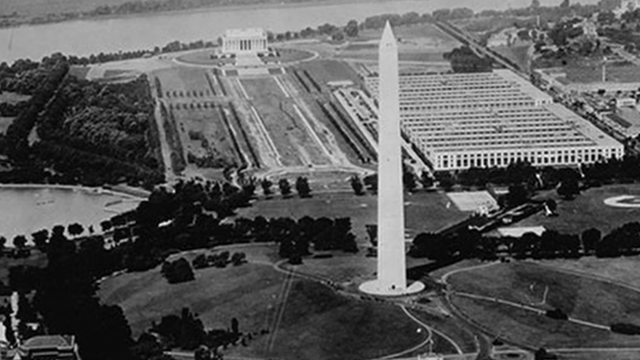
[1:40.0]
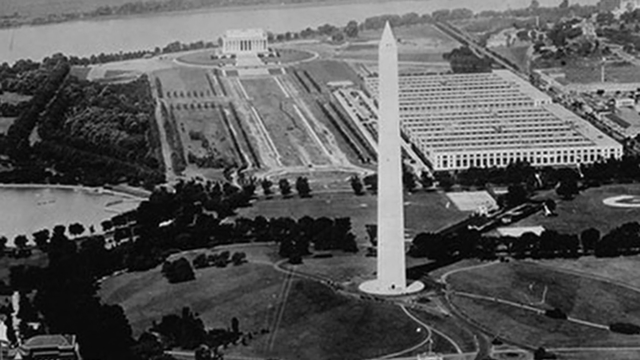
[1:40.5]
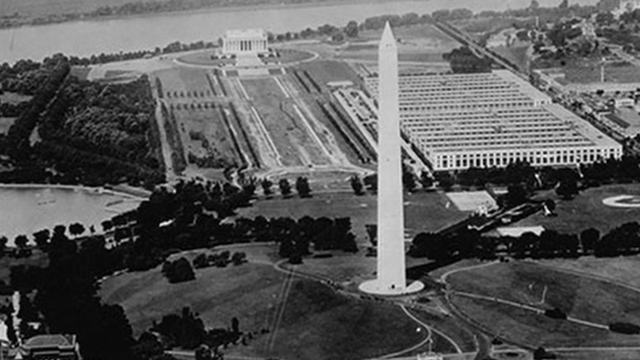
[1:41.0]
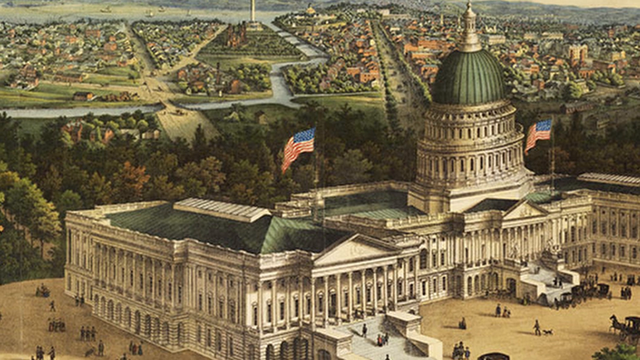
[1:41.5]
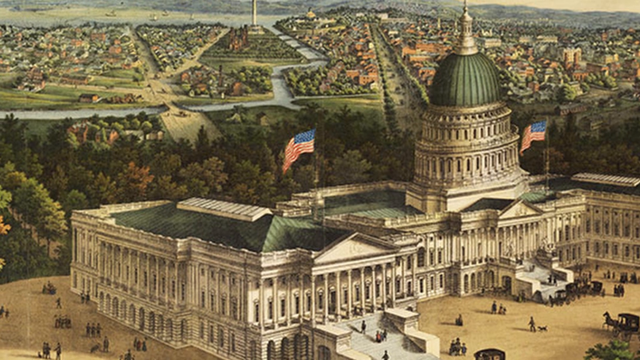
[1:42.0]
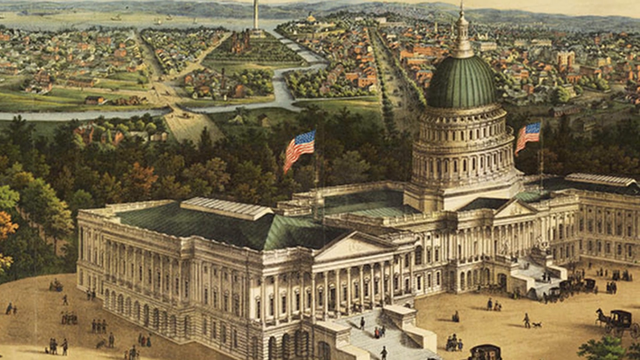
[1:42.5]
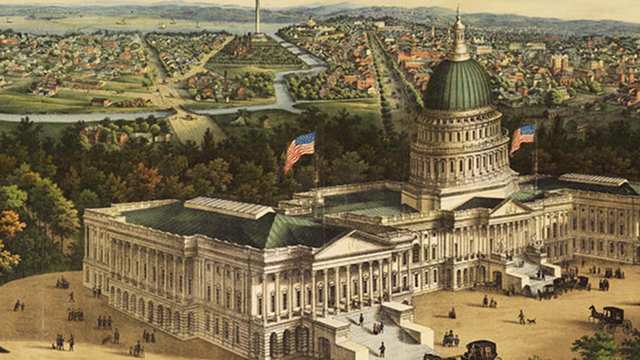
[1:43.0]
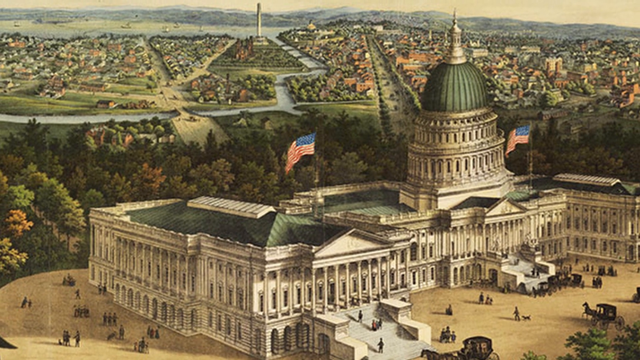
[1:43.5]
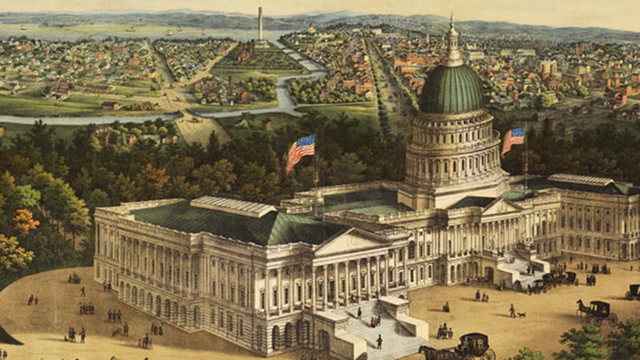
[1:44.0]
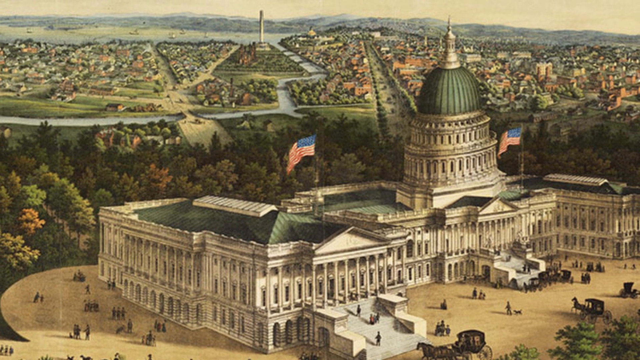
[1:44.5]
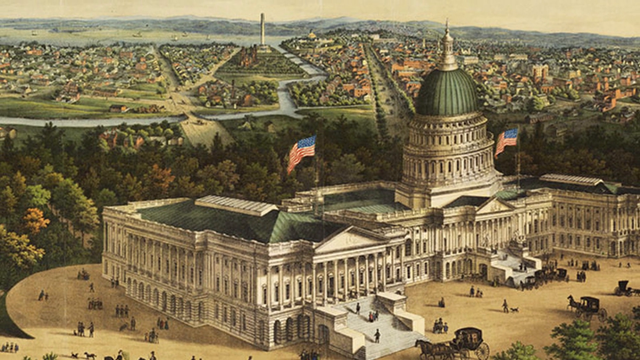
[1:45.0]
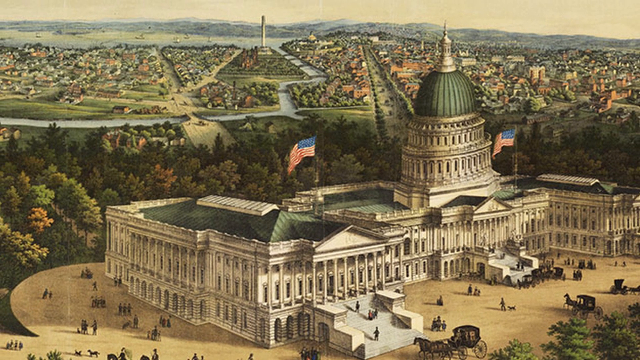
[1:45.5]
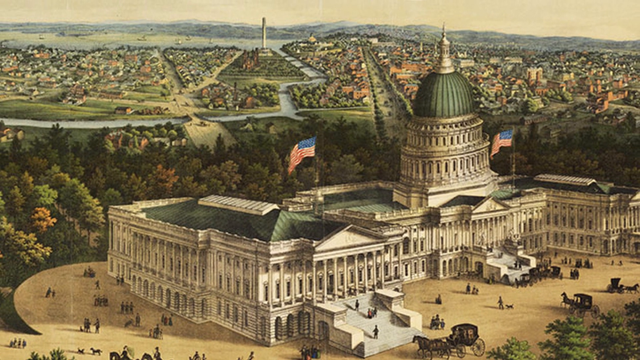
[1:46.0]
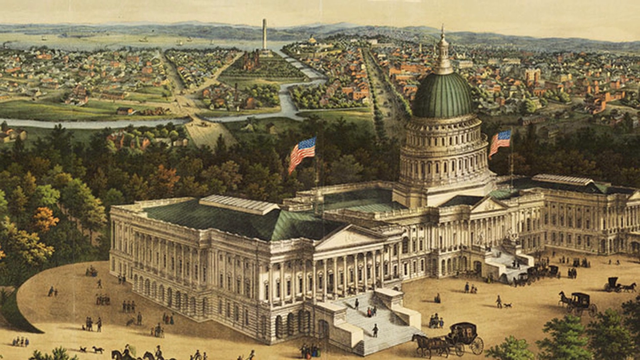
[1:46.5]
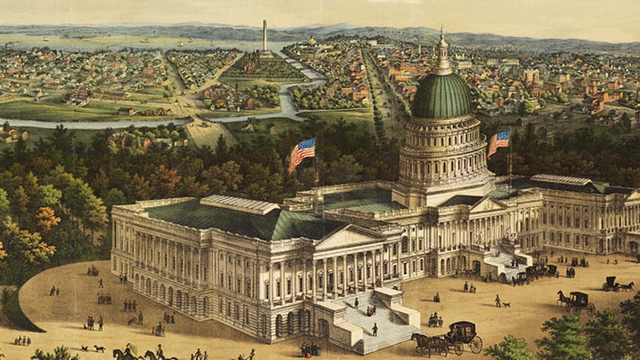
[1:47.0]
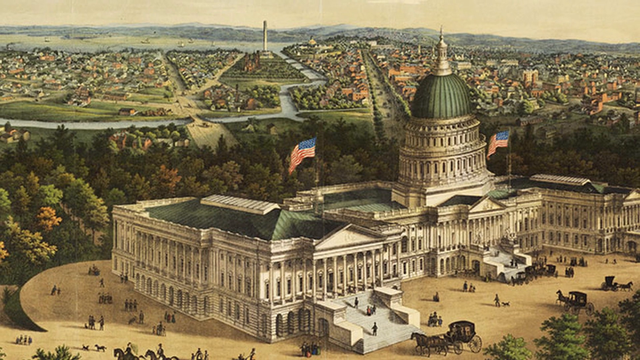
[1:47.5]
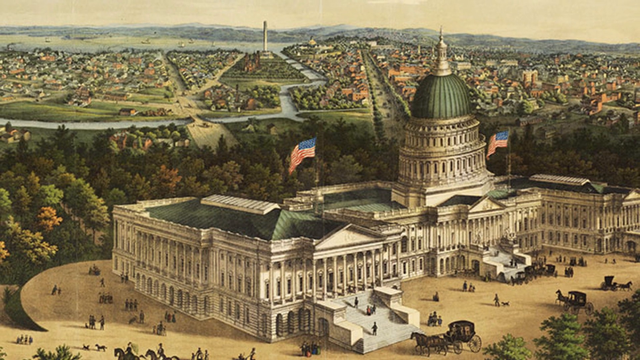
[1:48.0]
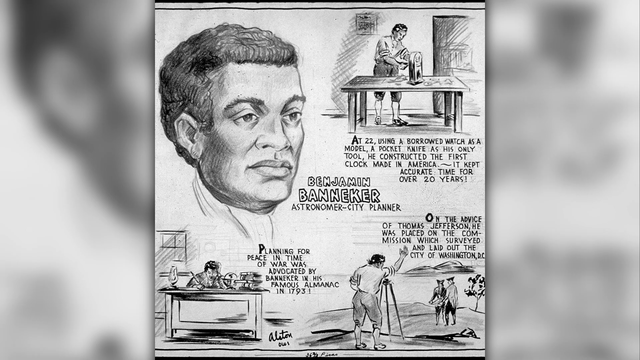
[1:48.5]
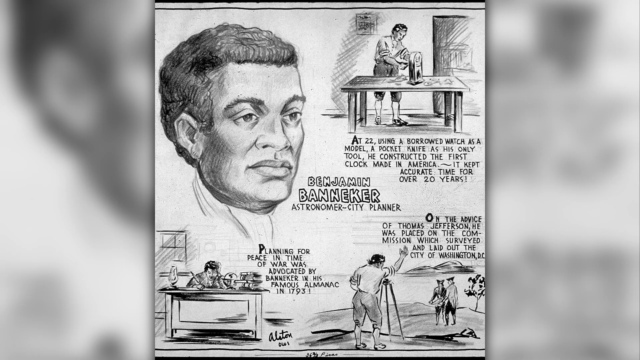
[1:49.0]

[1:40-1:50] An old-fashioned picture shows the federal buildings in Washington, with the area at the front with pillars and walkways, and the dome. Two American flags are flying at either side of the building, and the green roof is visible. People are milling about in the area to the front and side of the building. To the rear is an area with lots of trees, and the Washington Monument is in the background near the river. There are houses in the distance under the buildings, and in the far distance there are trees and mountains. The screen then cuts to a pencil picture made up of a number of drawings of Benjamin Banneker, the astronomer and city planner. One shows him working at a bench mending clocks, with the caption "at 22 using a borrowed watch as a model, a pocket knife as his only tool he constructed the first clock, made in America. It kept accurate time for over 20 years." Underneath a portrait of his head, he is shown at work at a desk, where it says "planning for peace in time of war was advocated by Banneker in his famous almanac in 1793". Next to this, in the bottom centre, he is shown working at a tripod looking out towards an island, and it says "on the advice of Thomas Jefferson he was placed on the commission which surveyed and laid out the city of Washington DC".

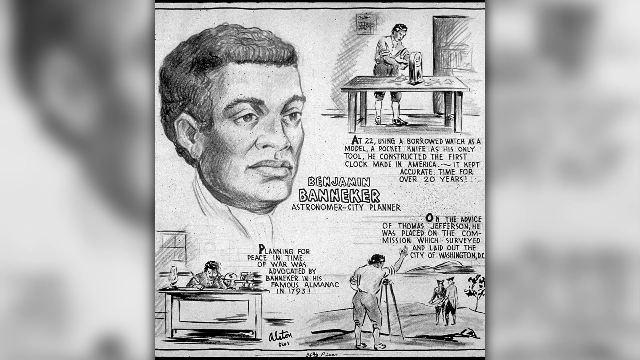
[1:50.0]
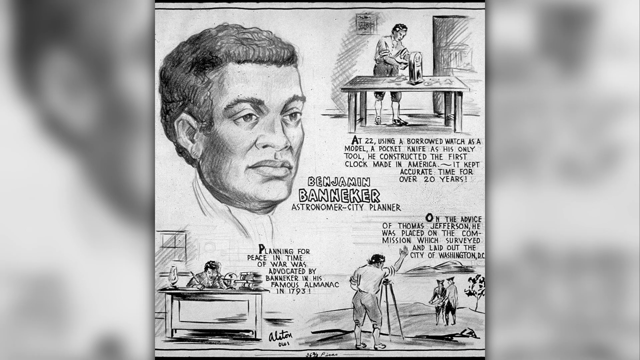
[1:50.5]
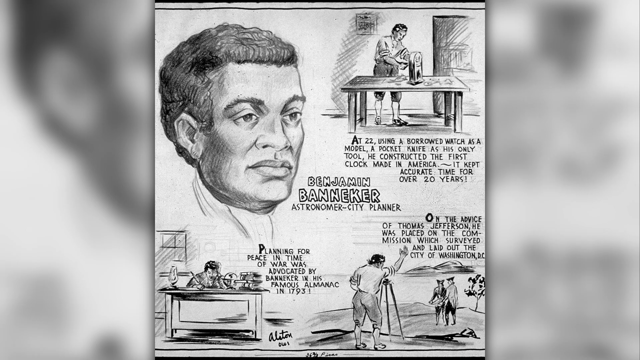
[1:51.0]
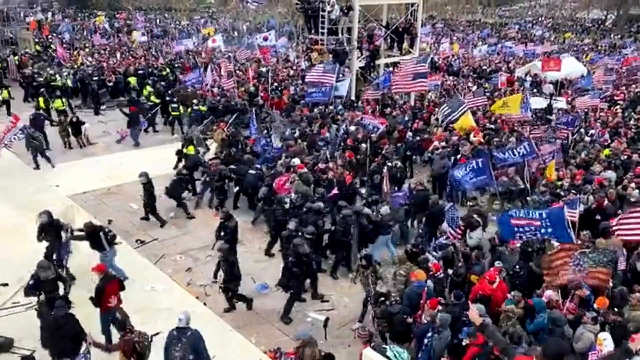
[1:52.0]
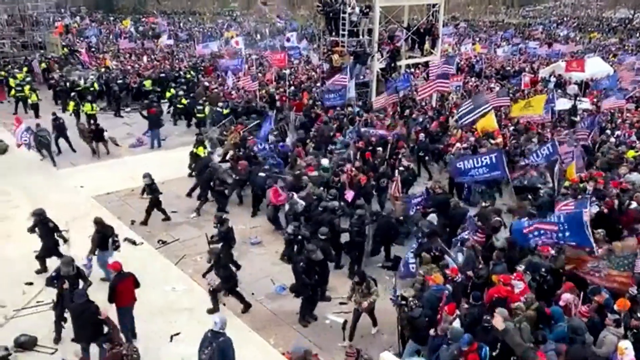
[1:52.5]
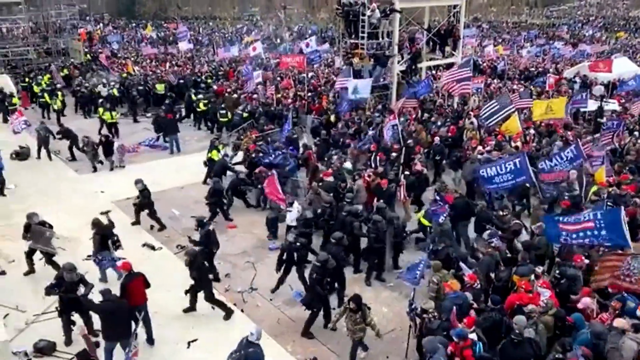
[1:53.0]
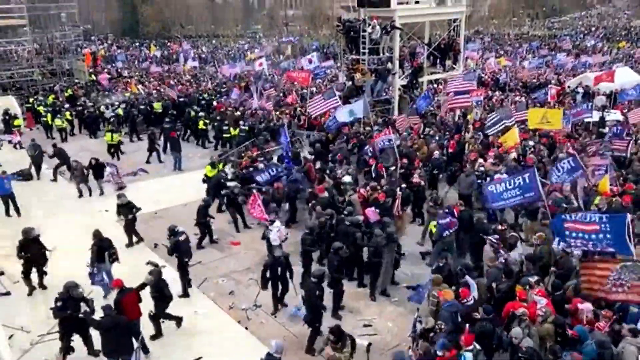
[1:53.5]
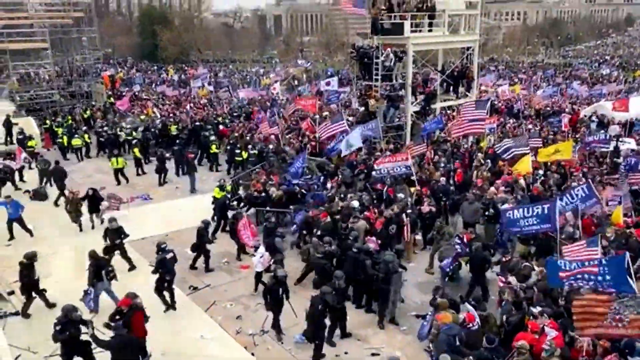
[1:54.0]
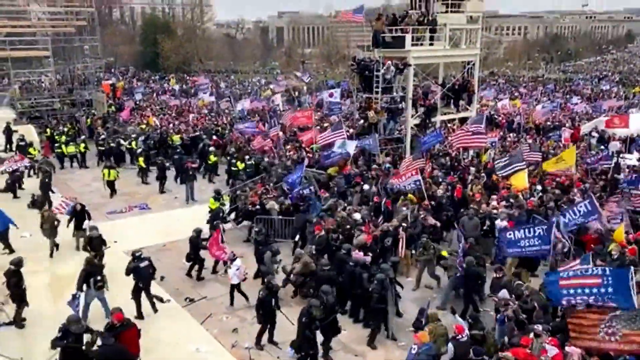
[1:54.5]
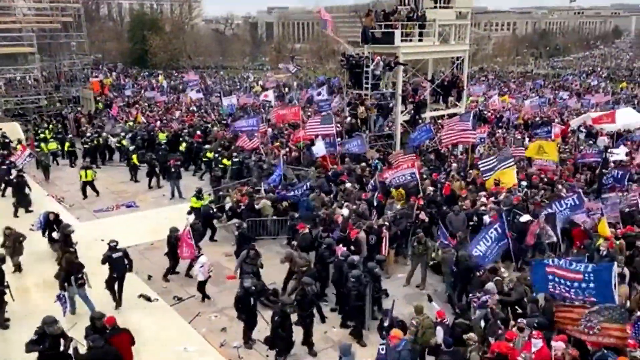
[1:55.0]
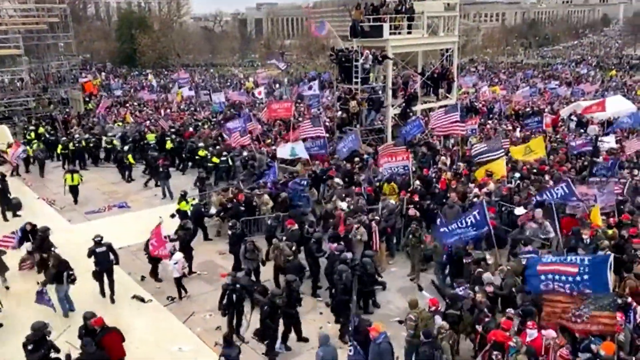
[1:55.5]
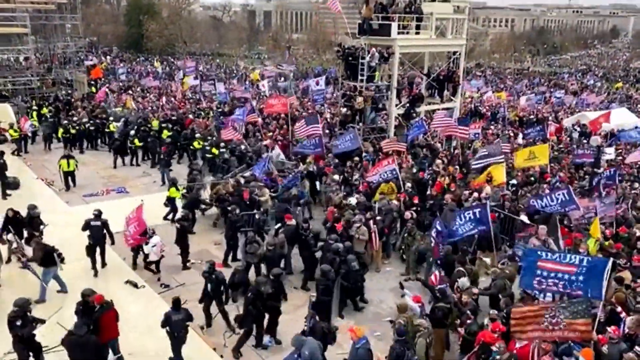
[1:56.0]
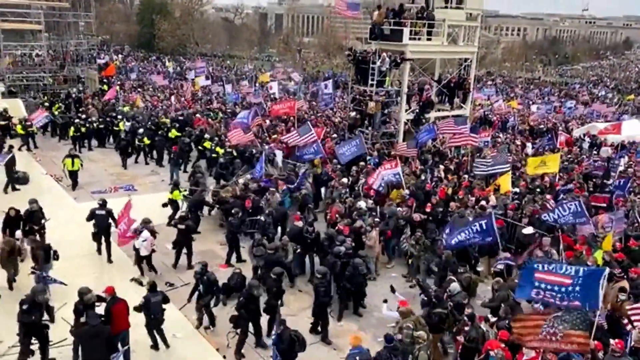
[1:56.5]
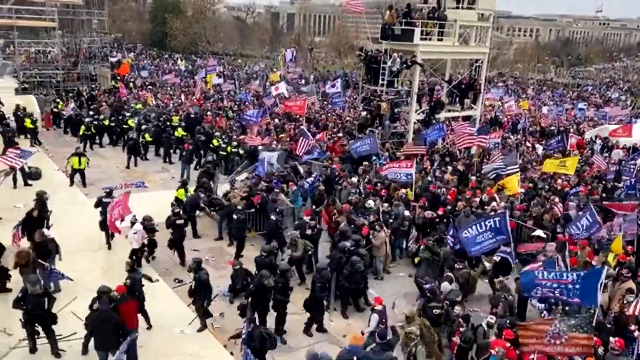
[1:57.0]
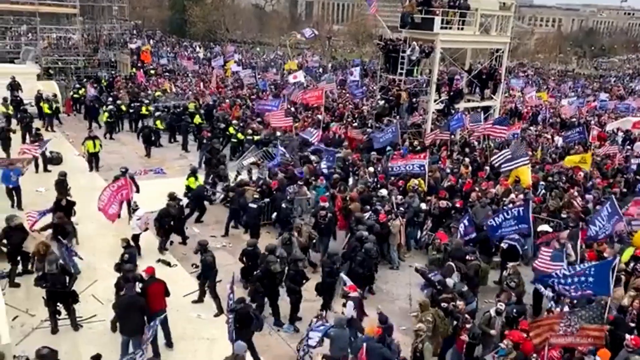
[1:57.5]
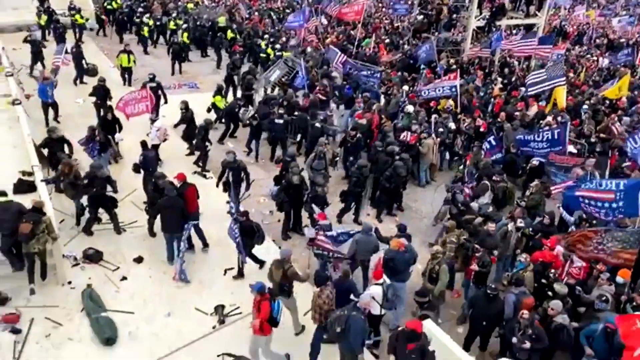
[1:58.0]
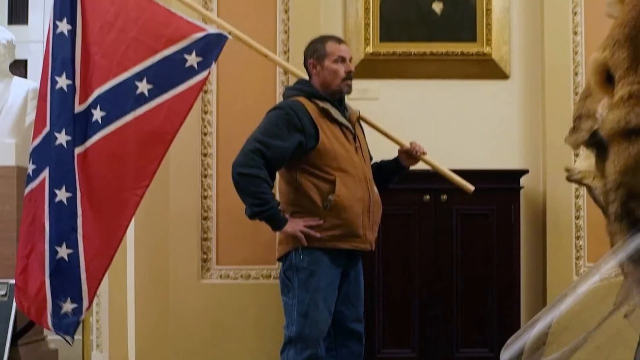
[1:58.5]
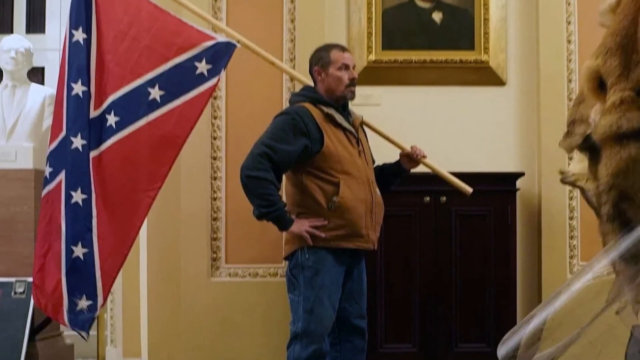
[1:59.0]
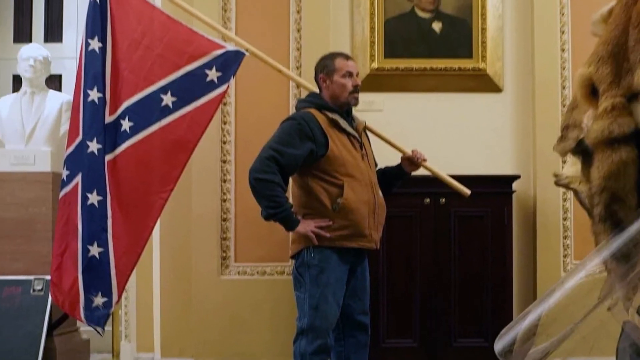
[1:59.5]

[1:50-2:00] An aerial shot shows a riot, with American flags flying in the crowd. In the foreground are a number of riot police in uniform with helmets, shields and truncheons, and there are police officers in high-vis. The crowd is many thousands strong, and the riot police look to be being beaten back by the crowd. An interior shot then shows a man in a brown jacket and blue jeans holding the Confederate flag in an office, standing underneath a picture of President Lincoln. This is likely the storming of Congress in Washington on 6th January 2021.